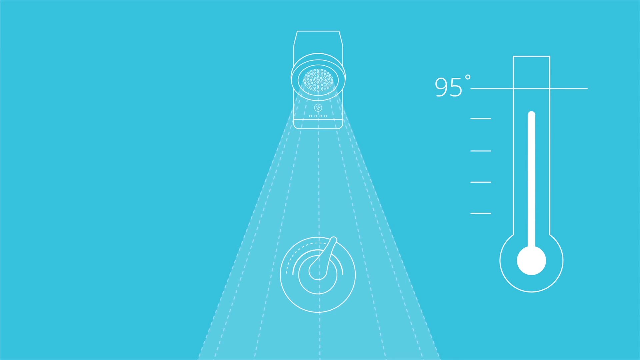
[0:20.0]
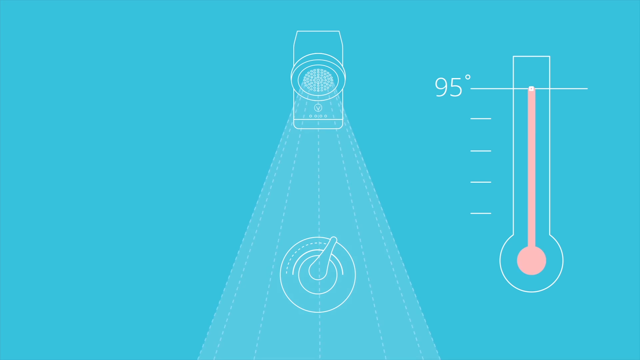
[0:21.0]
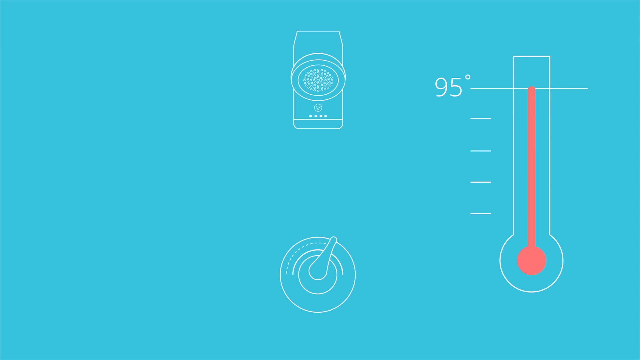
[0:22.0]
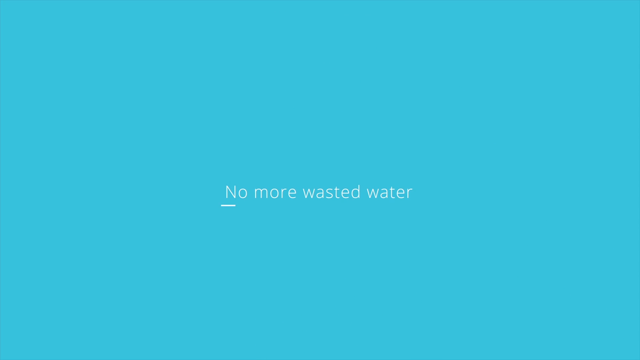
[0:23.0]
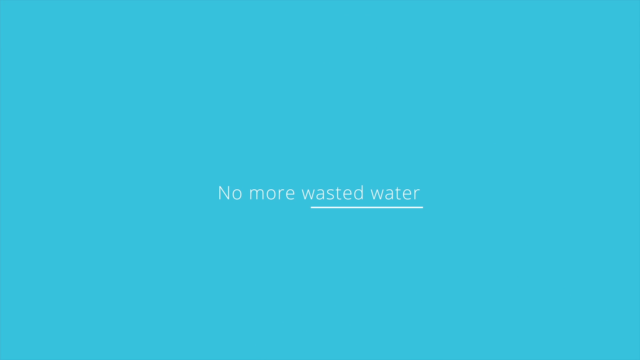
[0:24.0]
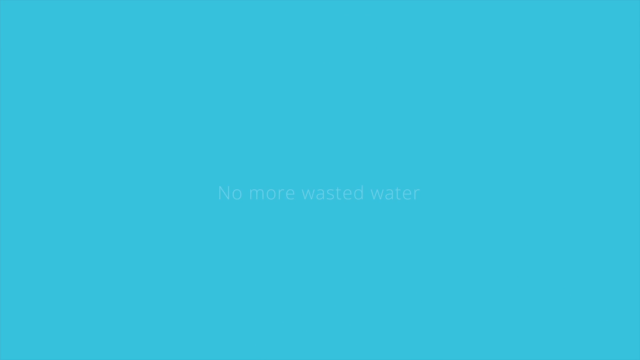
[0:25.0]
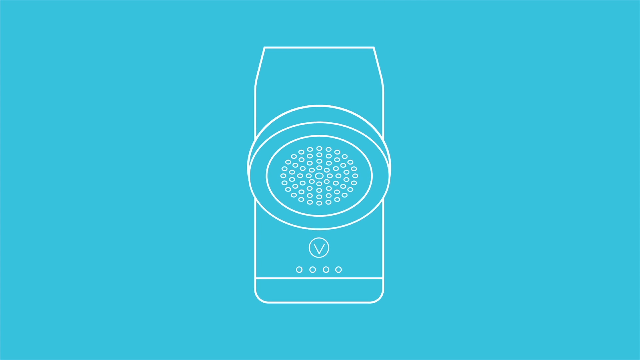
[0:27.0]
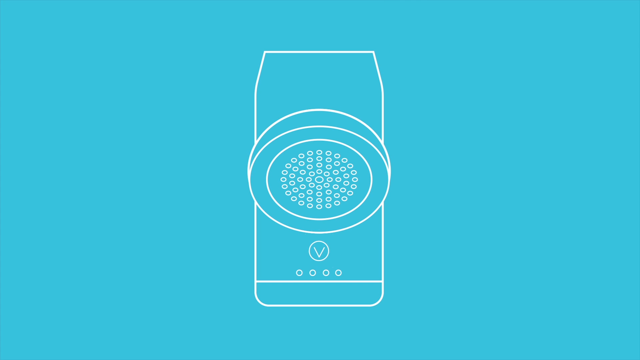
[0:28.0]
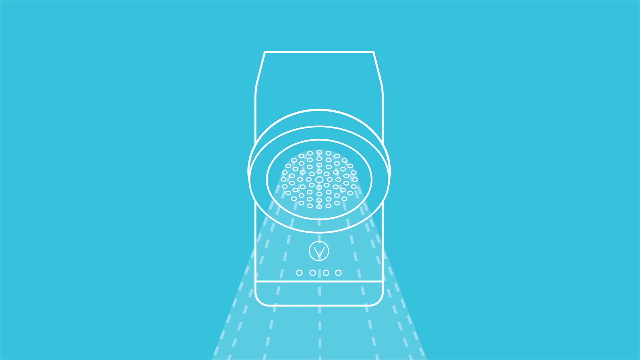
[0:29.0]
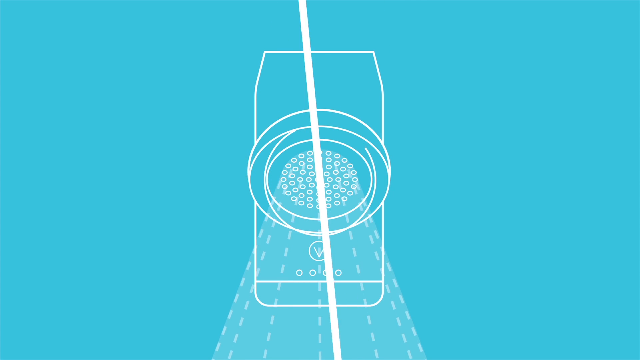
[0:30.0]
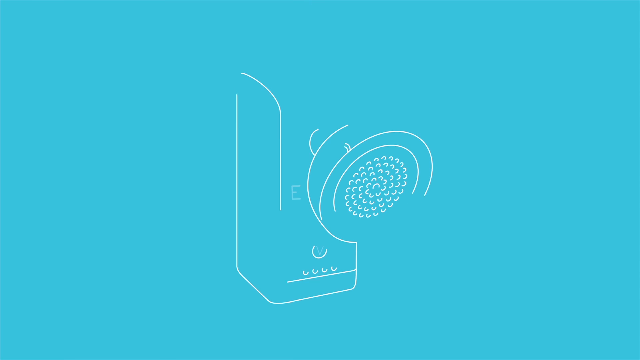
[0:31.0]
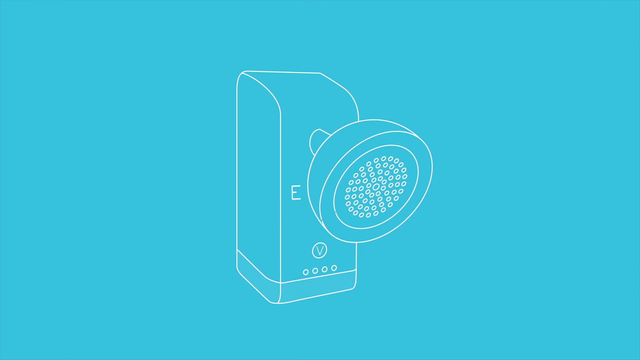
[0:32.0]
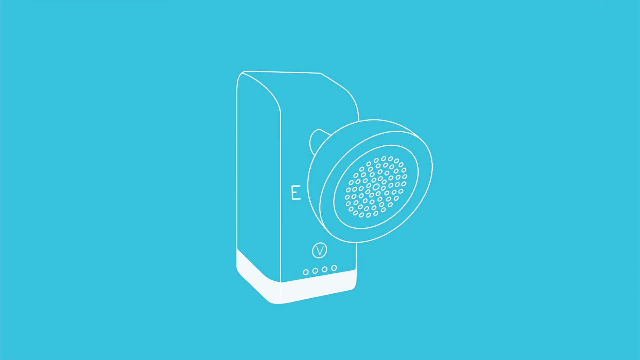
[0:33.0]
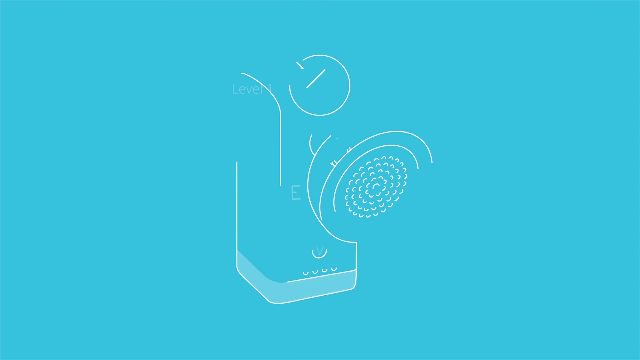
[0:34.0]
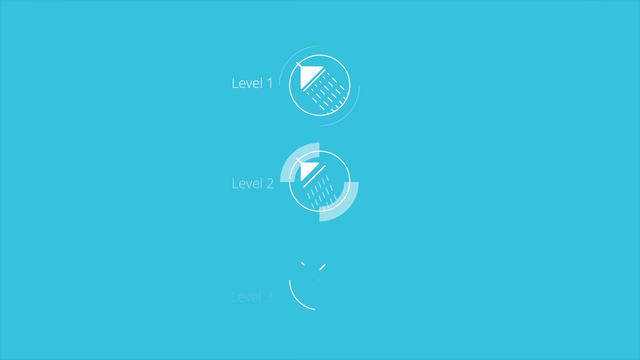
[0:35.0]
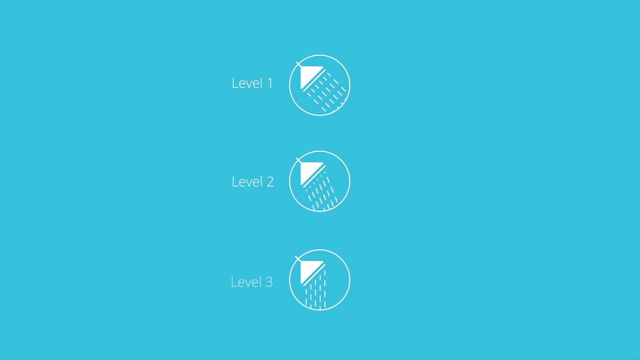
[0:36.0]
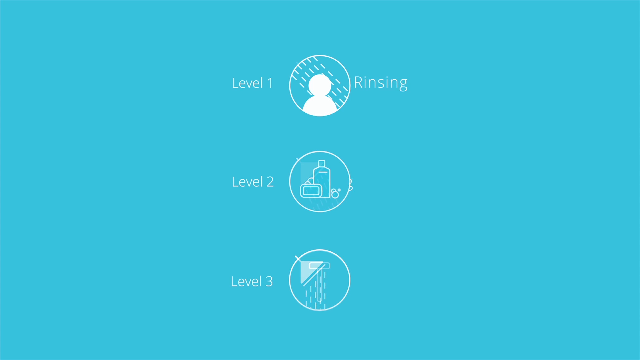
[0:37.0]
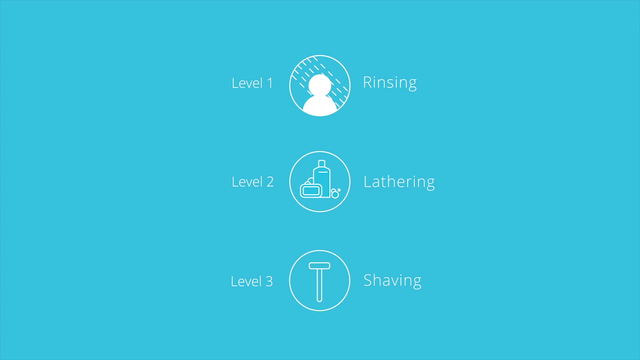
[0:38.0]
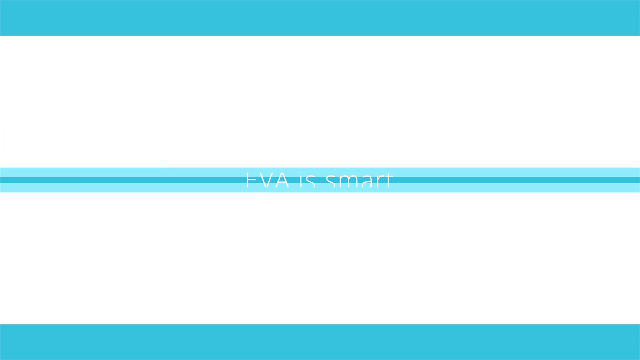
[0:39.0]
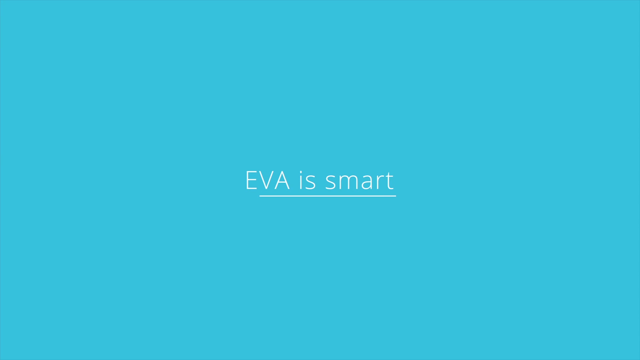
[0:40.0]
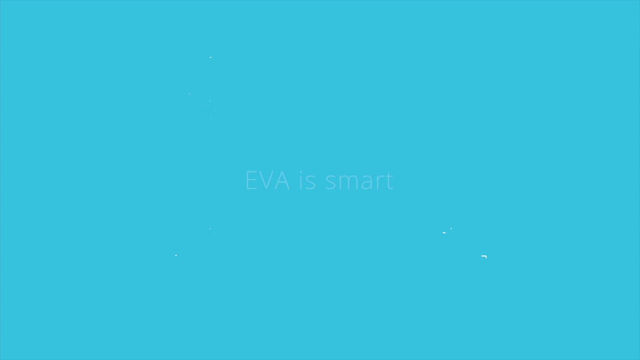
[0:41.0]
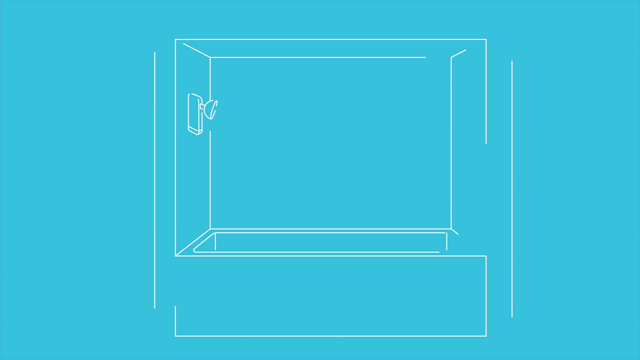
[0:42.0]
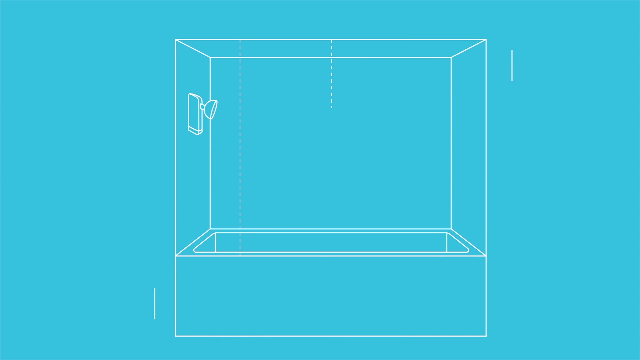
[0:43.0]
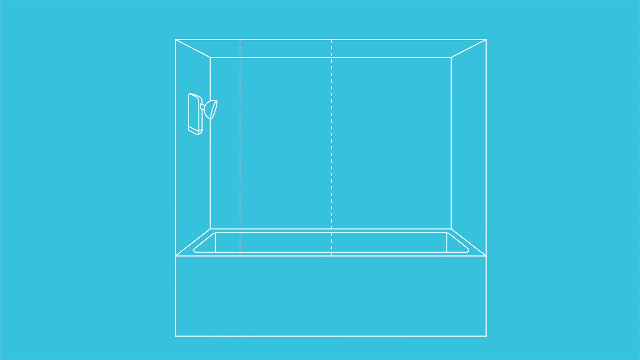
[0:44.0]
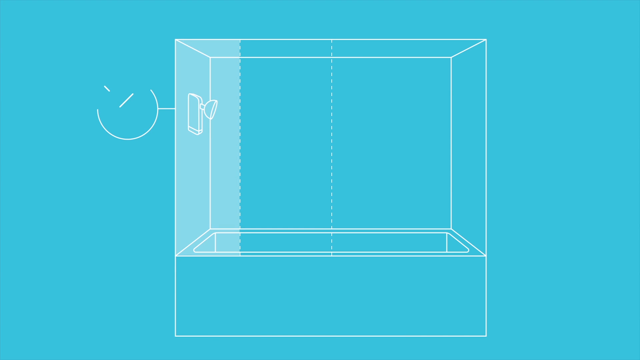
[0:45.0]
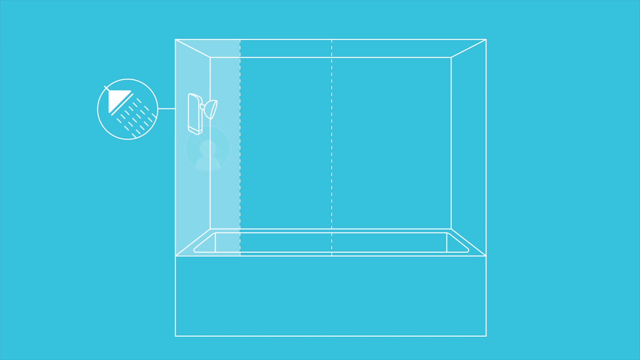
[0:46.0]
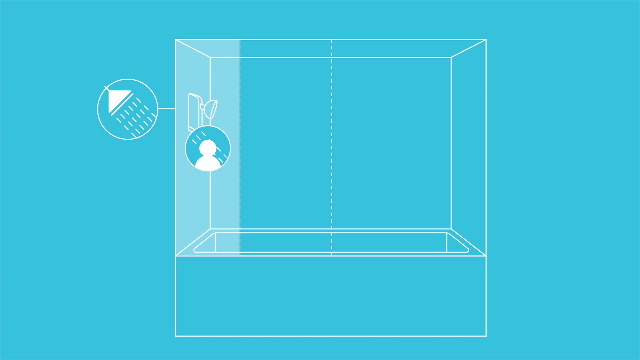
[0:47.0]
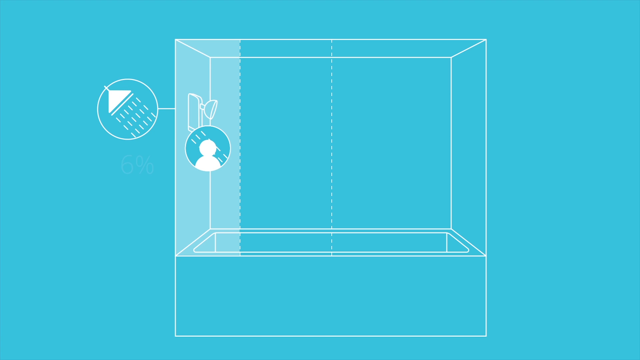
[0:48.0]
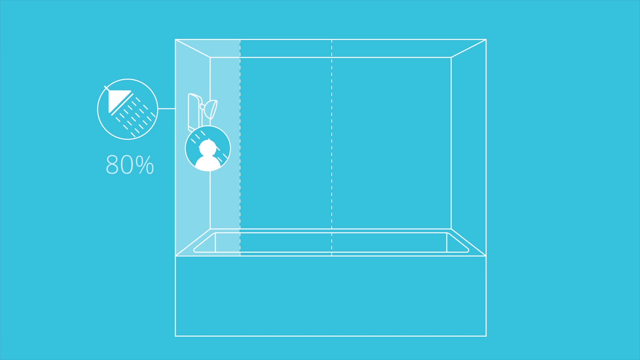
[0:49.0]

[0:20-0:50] A thermometer is on the right-hand side. It has a single numeric value, 95 degrees, towards the top of the diagram, and four additional dashes below it. The main part of the frame shows a diagram of a shower head emitting water, with a dial below it. All of the diagrams are in white on a sea-green background. The thermometer reaches the 95 degree value and changes from white to red when it does so. Text then appears, entirely in white, stating "No more wasted water". The video zooms out to show the shower head again, with water being emitted from it. This disappears to show a different view of the shower head, this time from 45 degrees. A number of icons follow, labelled "Level 1", "Level 2" and "Level 3". For Level 1 the water coming out of the shower seems to be at full strength; for Level 2 it is weaker, and for Level 3 weaker still. The images then change: the Level 1 icon shows a silhouette of a person with the text next to it changing to "rinsing"; the Level 2 icon changes to show a number of bottles with the text "lathering"; and the Level 3 icon changes to show a razor with the text "shaving". More text then states "Eva is smart". A diagram of what appears to be a bath follows, with the shower above the bath.